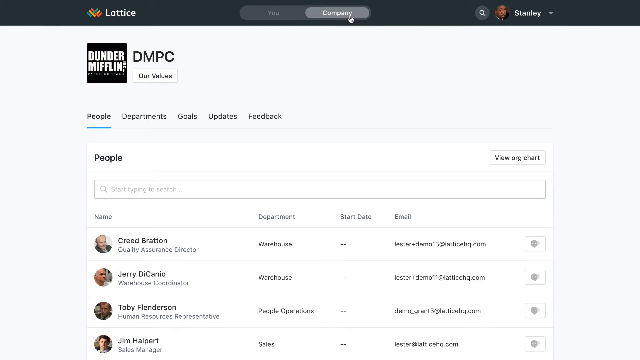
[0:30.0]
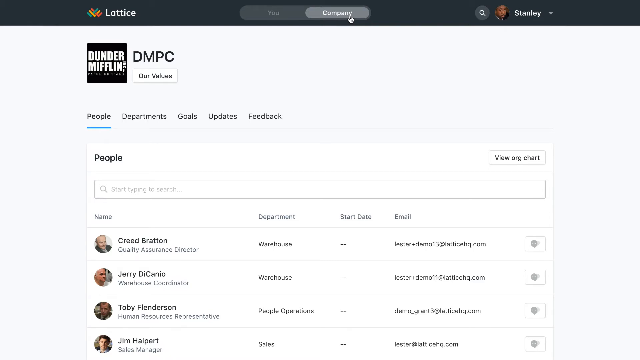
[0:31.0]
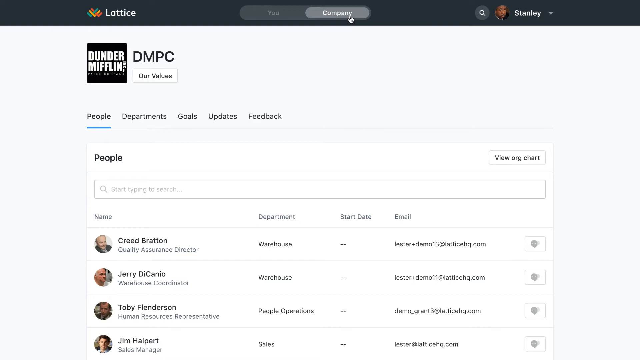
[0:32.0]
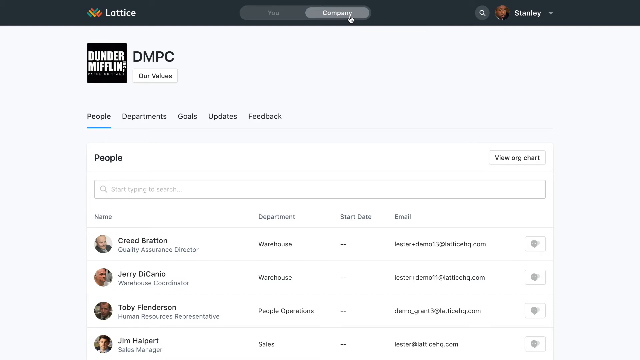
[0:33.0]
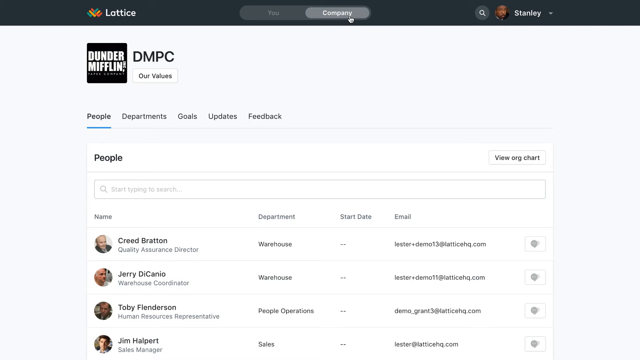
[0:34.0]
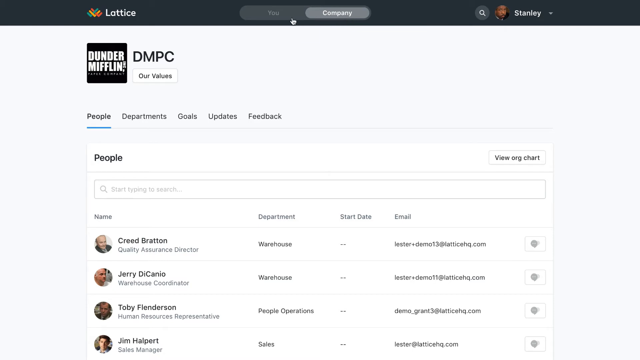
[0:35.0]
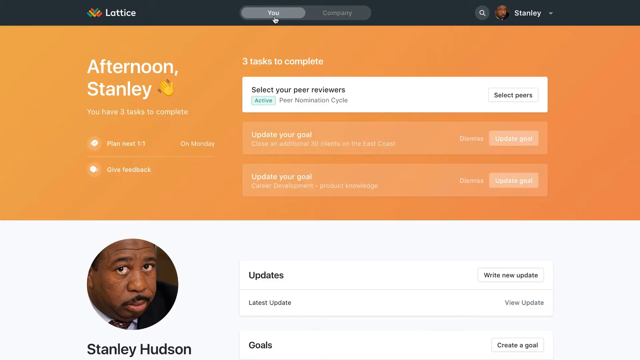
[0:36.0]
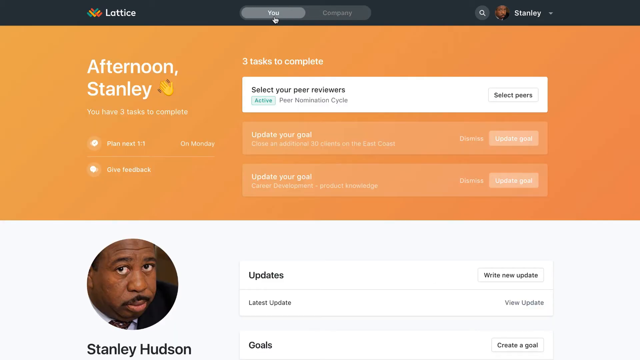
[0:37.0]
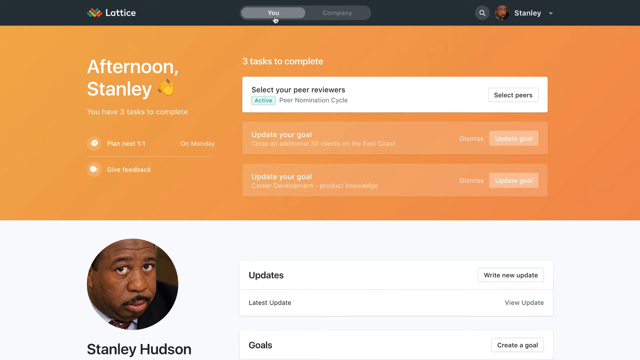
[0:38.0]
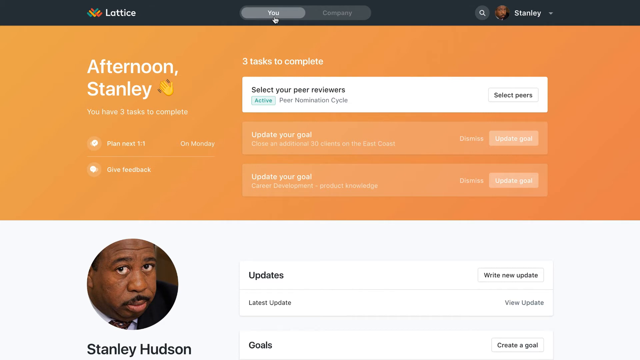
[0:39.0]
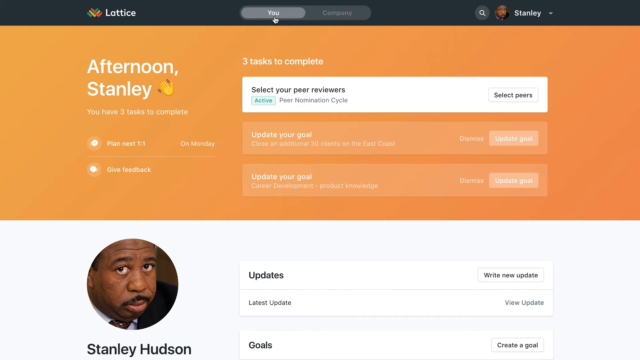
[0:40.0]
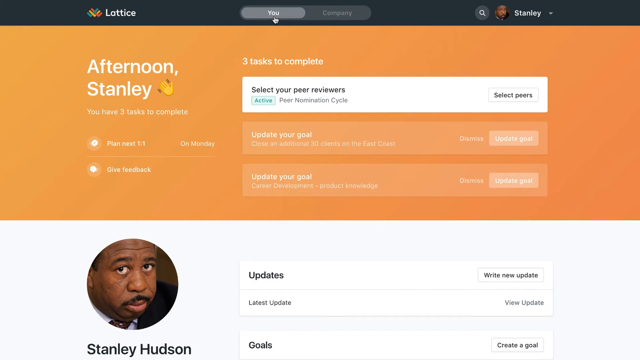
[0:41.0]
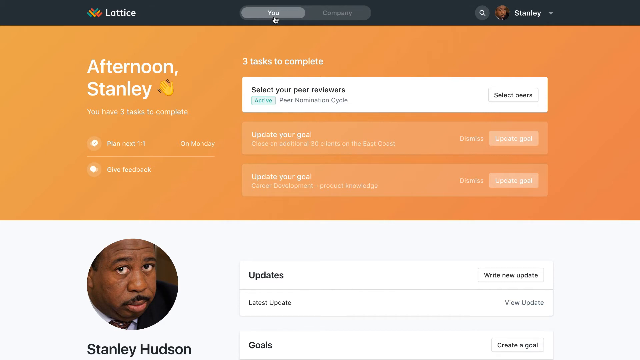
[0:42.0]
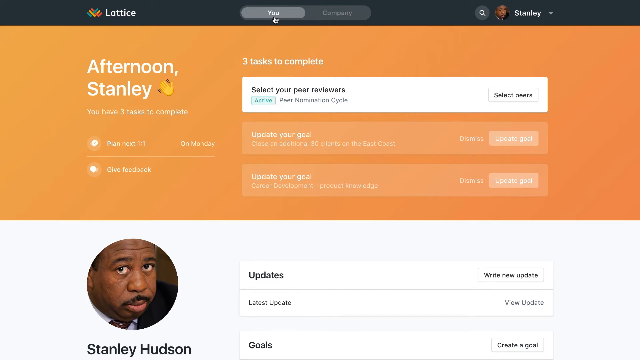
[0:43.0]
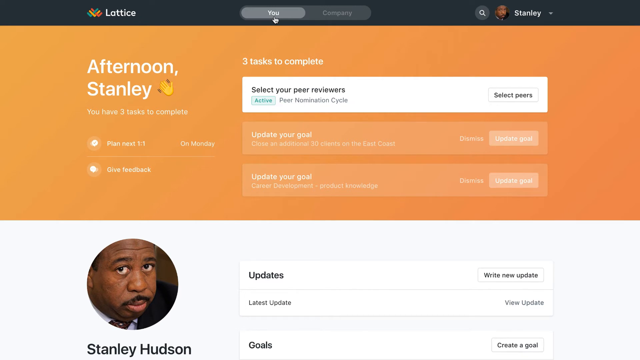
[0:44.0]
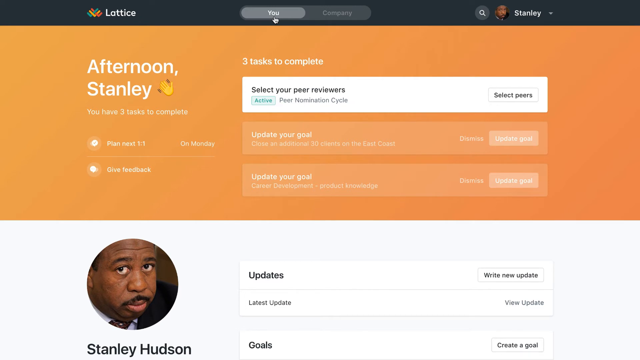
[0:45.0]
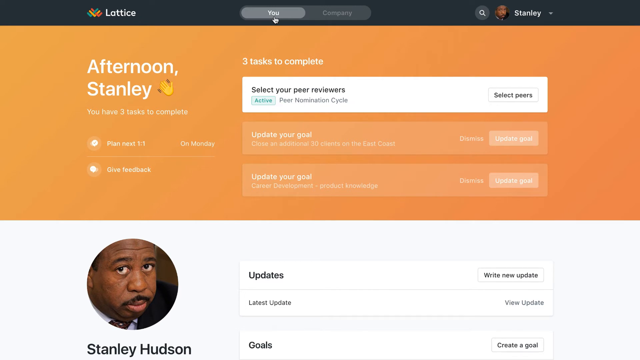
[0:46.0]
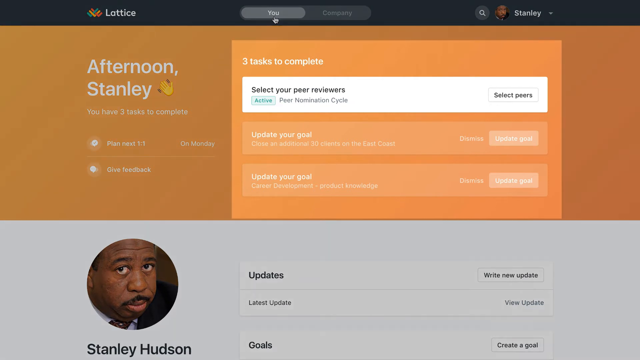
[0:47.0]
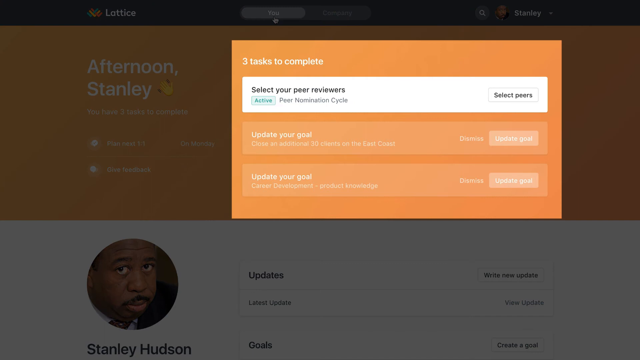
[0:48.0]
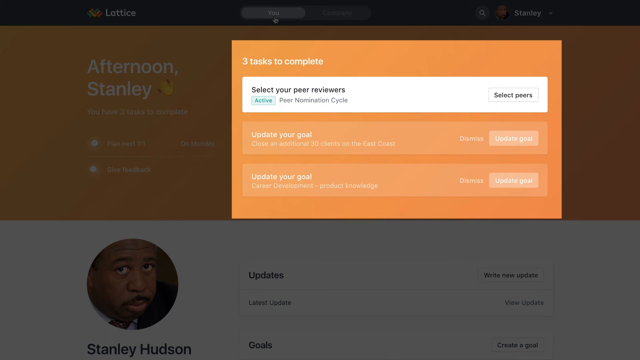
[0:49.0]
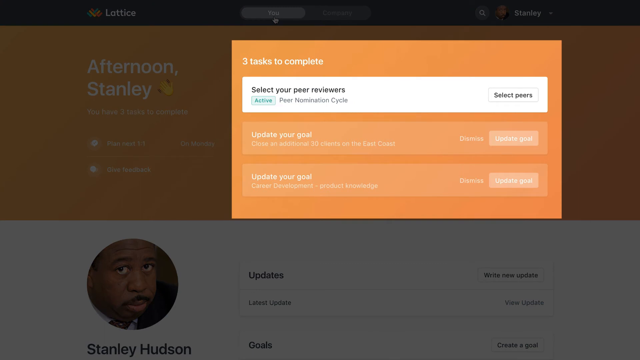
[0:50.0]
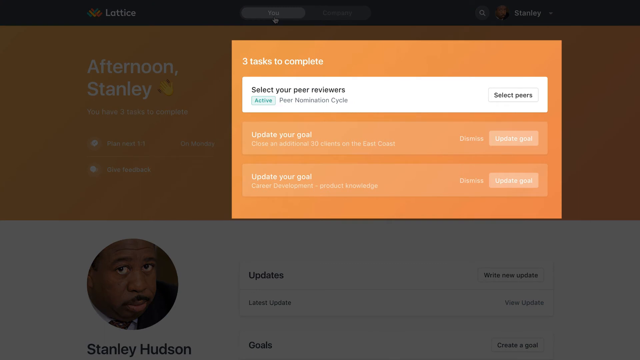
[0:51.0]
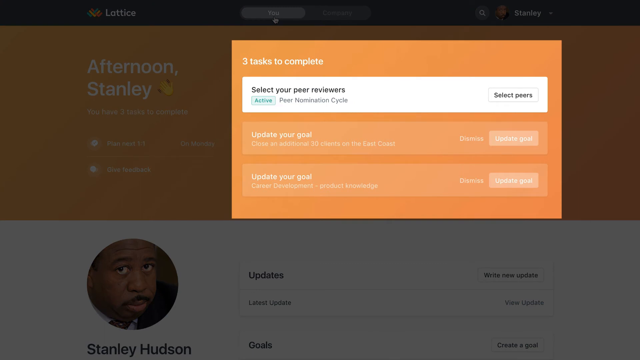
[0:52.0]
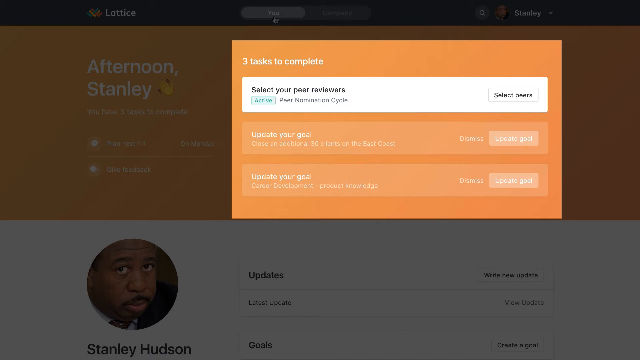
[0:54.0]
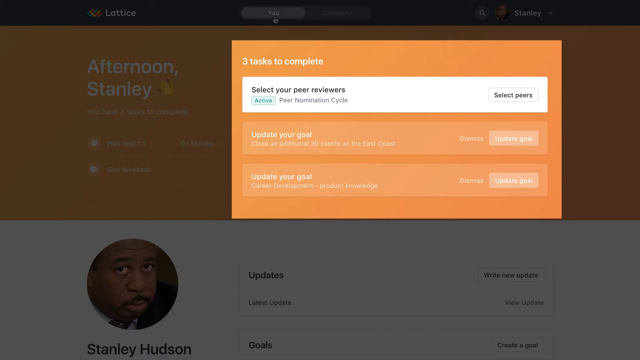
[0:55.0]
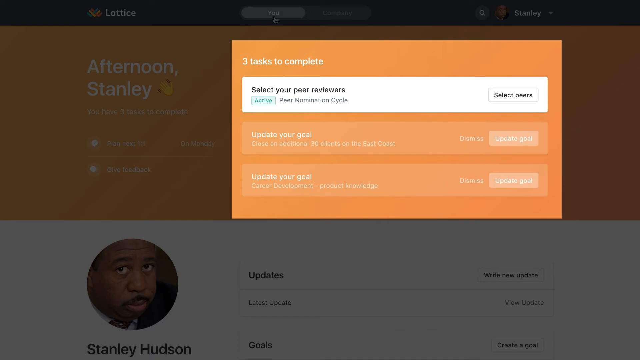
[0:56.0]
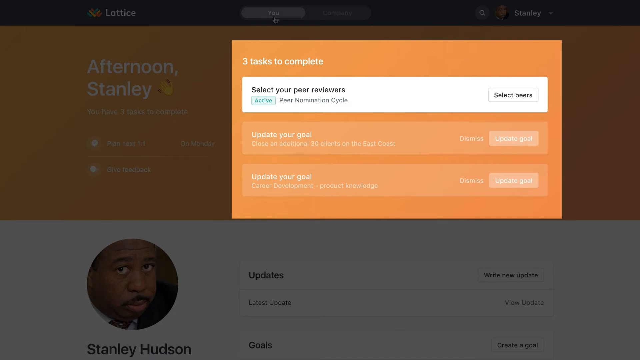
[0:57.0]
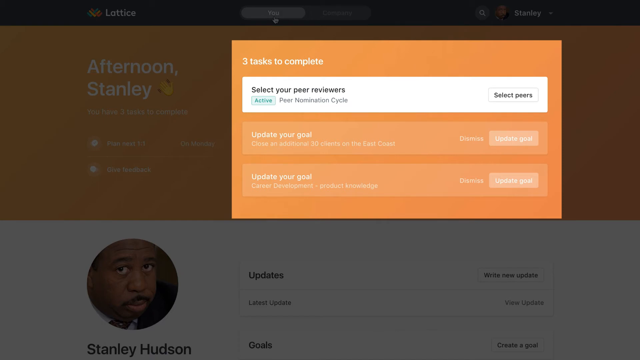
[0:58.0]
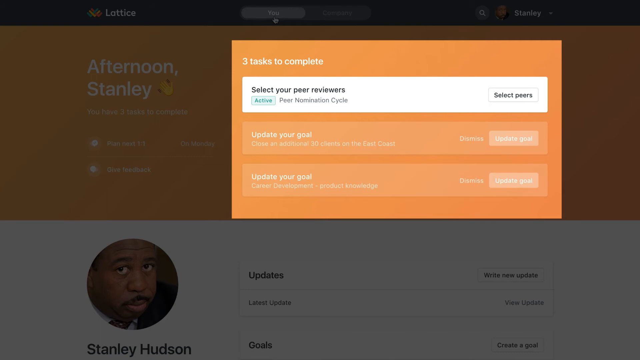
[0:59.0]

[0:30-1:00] A new page of the same website shows the Dunder Mifflin logo in the upper left corner, the fictitious company from the TV show The Office, and Stanley is recognizable as one of the show's characters. Just below are five tabs: "people," "departments," "goals," "updates," and "feedback." A list of people with several names is displayed, apparently after the user toggled to the company option. The user then toggles back to the "you" option, which again shows "afternoon Stanley" with a waving hand emoji. Below that it reads "you need to plan next one-on-one on Monday," and another item below reads "give feedback."